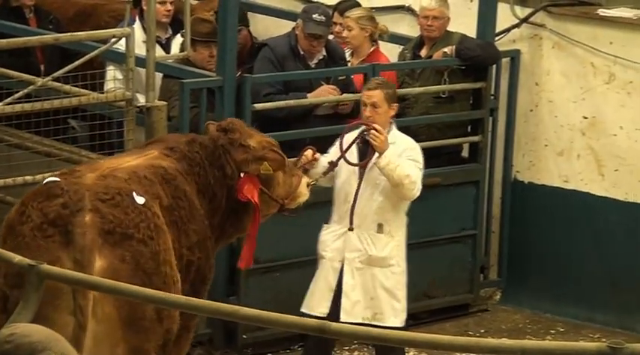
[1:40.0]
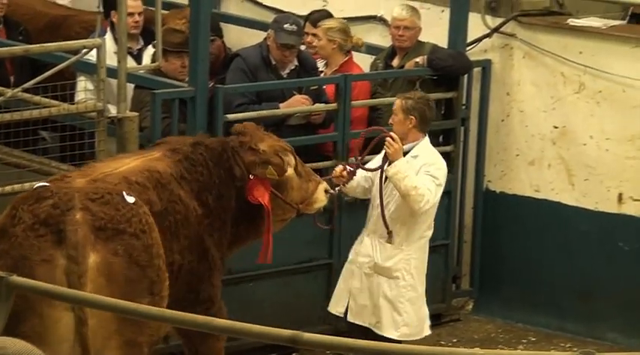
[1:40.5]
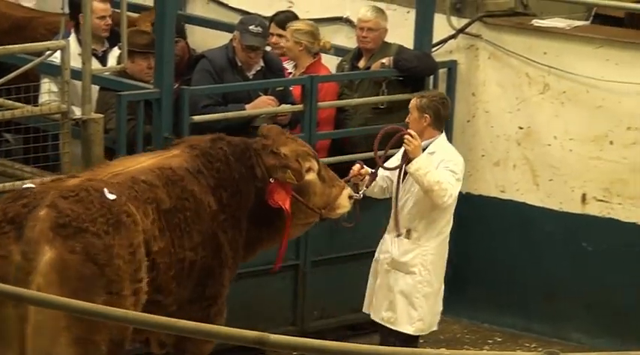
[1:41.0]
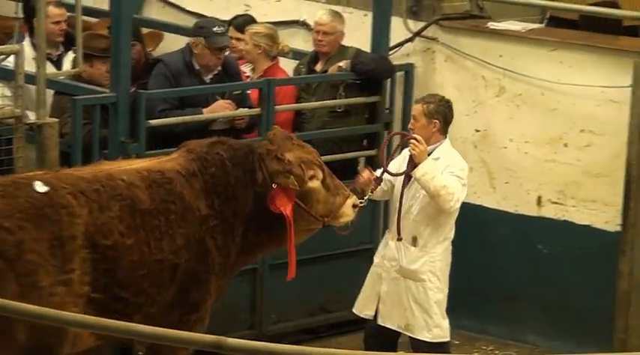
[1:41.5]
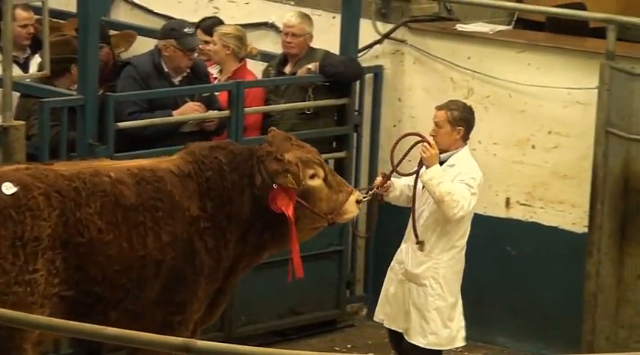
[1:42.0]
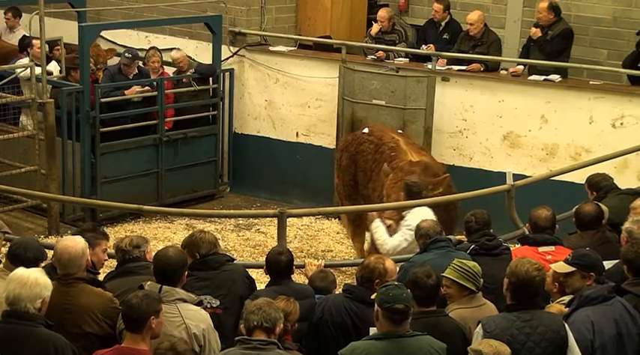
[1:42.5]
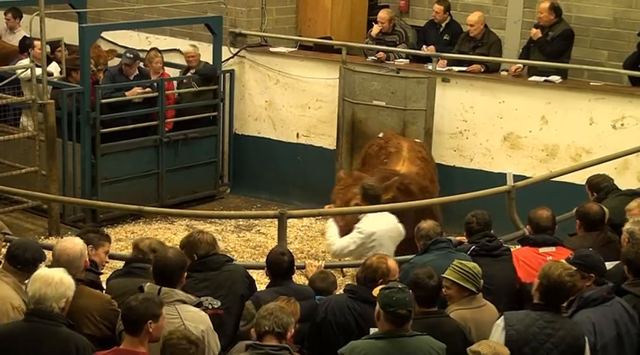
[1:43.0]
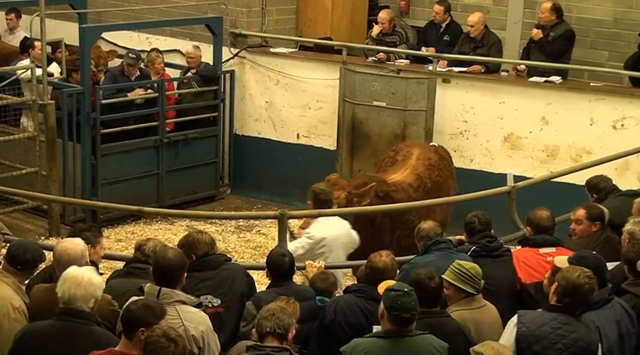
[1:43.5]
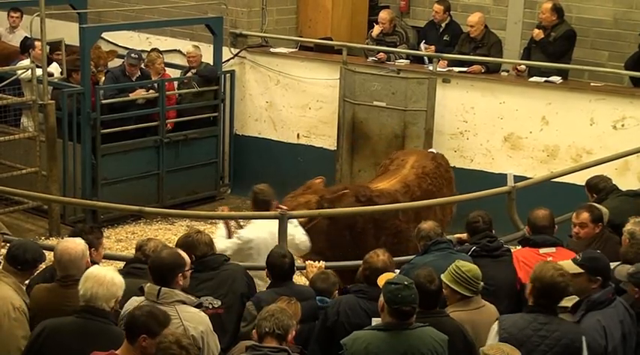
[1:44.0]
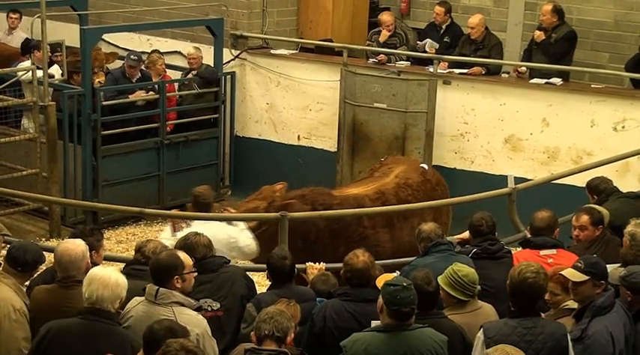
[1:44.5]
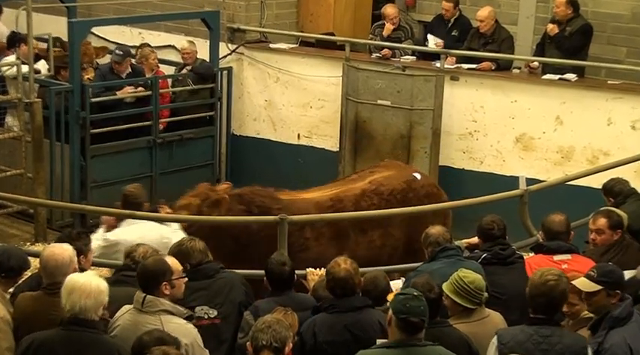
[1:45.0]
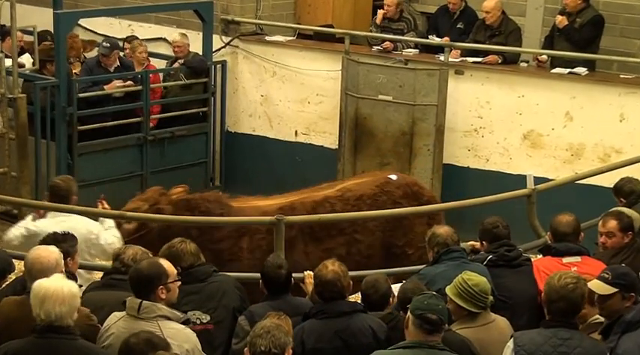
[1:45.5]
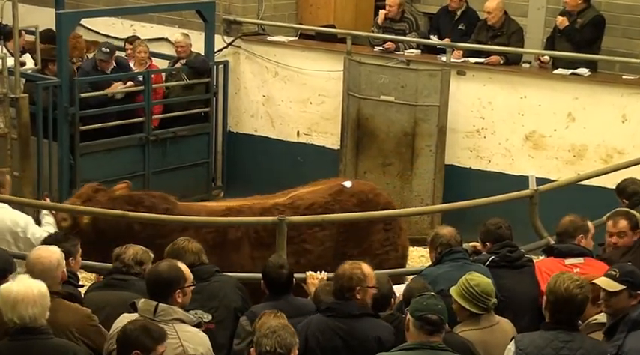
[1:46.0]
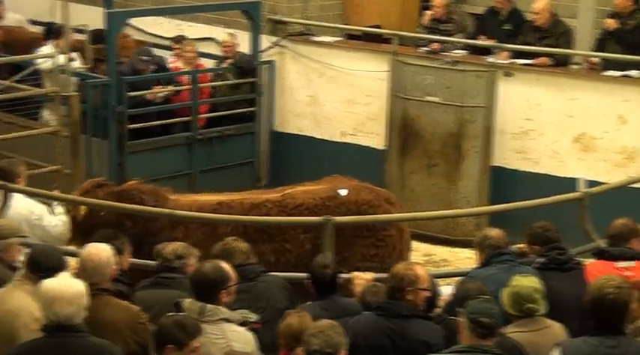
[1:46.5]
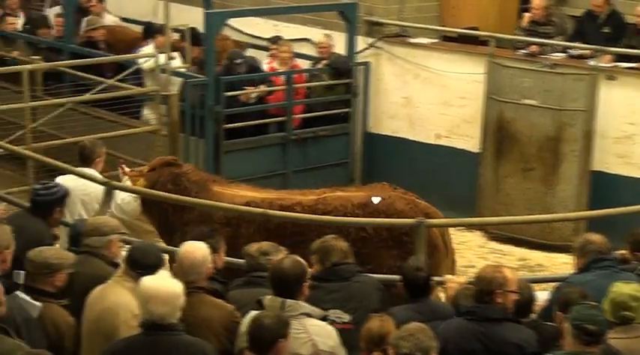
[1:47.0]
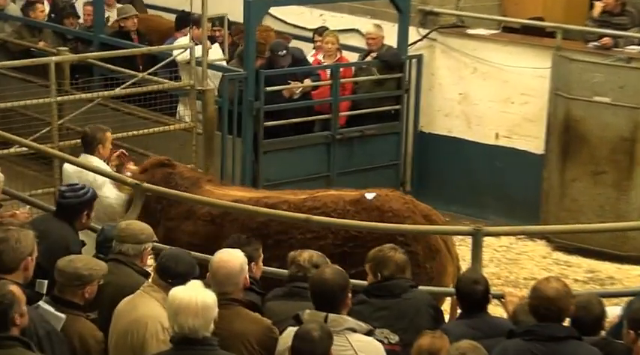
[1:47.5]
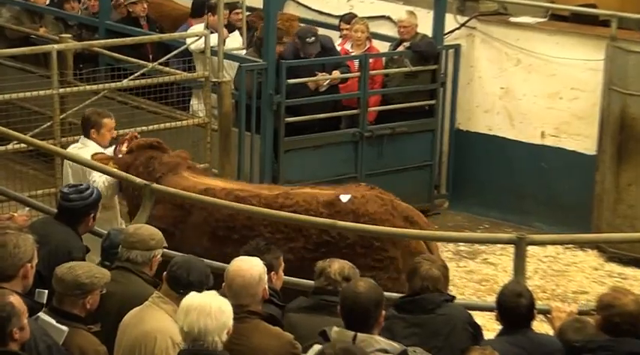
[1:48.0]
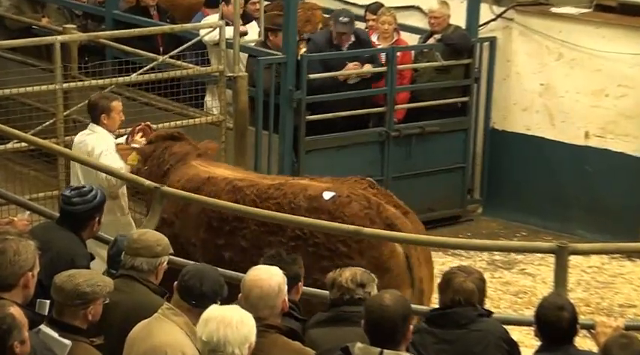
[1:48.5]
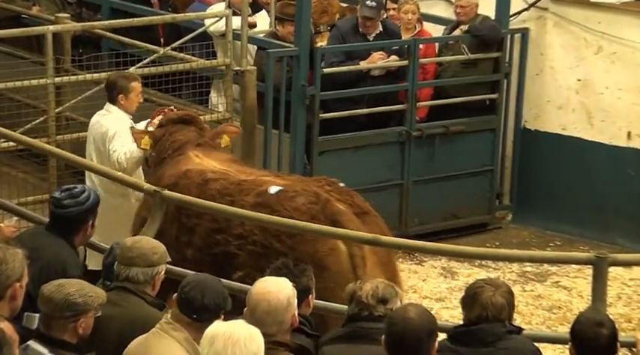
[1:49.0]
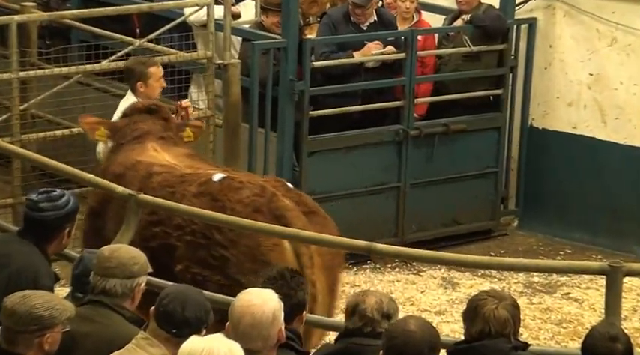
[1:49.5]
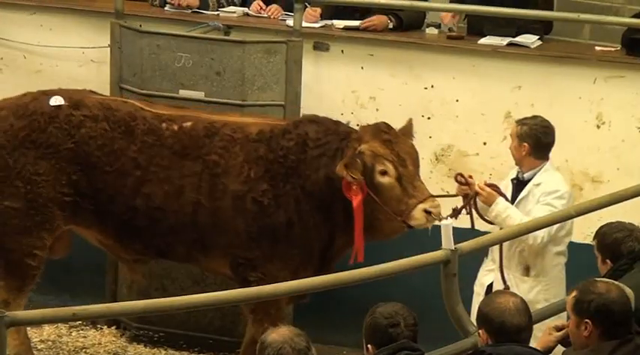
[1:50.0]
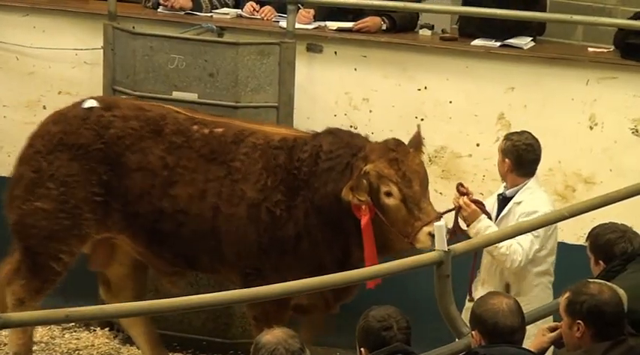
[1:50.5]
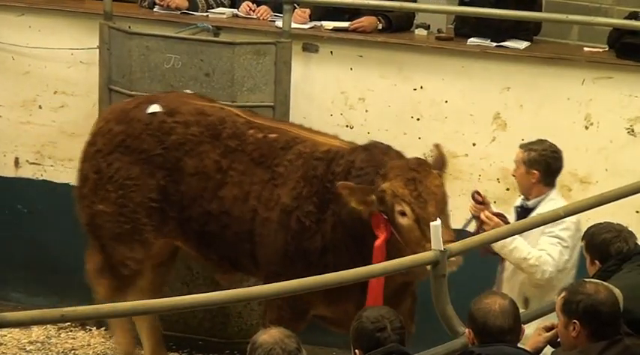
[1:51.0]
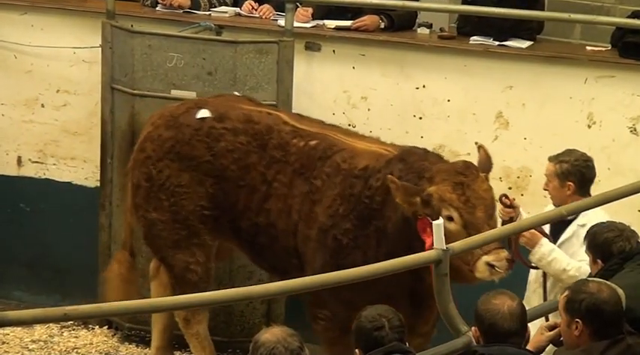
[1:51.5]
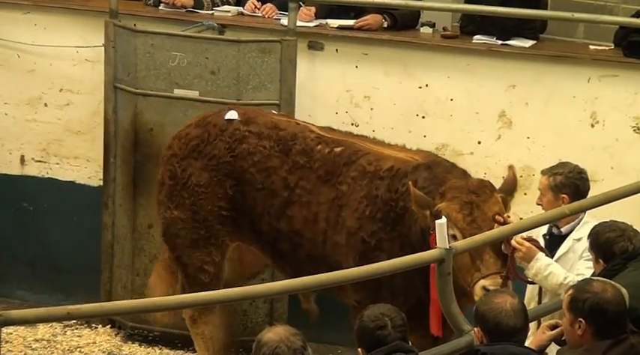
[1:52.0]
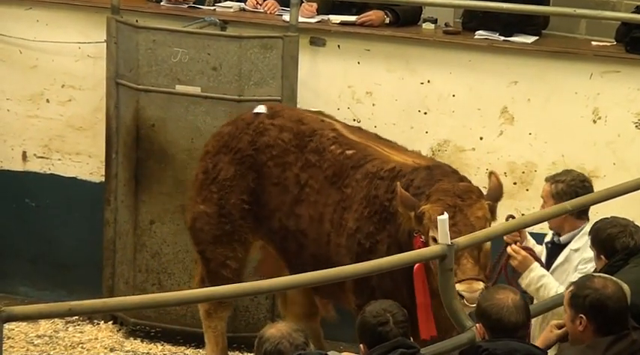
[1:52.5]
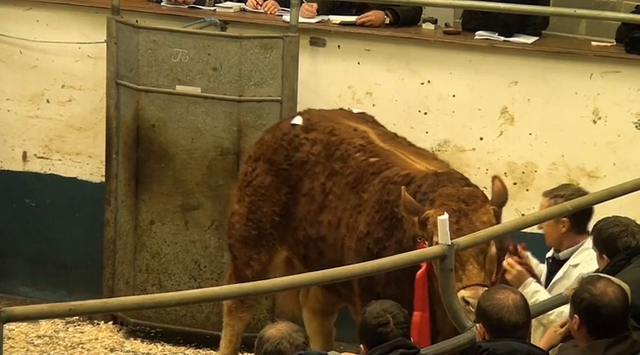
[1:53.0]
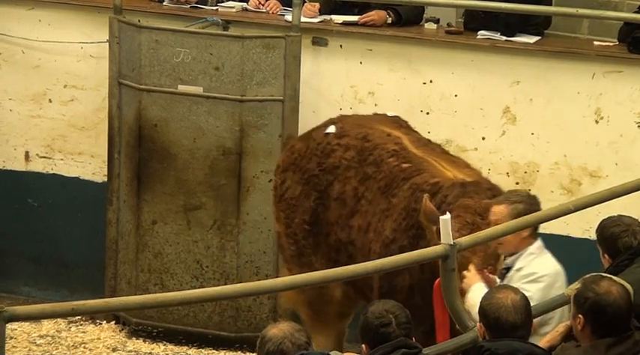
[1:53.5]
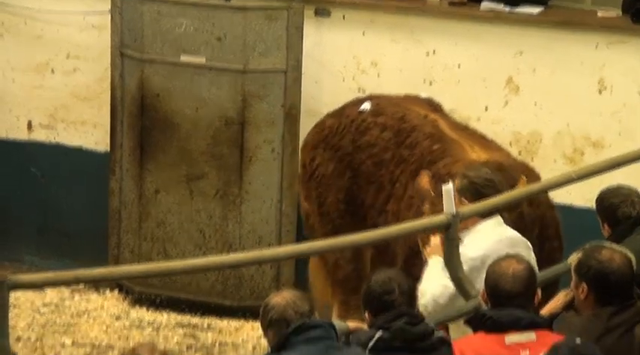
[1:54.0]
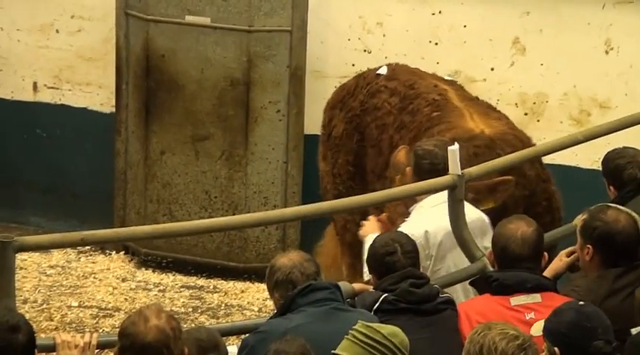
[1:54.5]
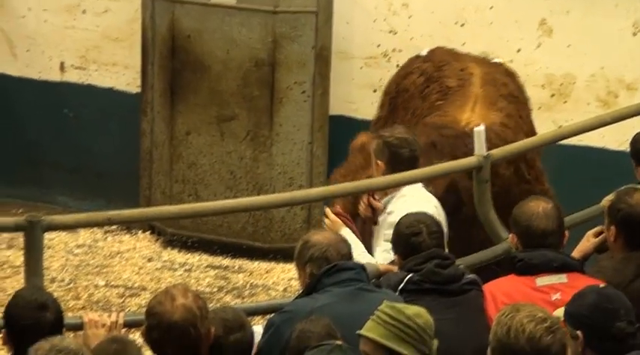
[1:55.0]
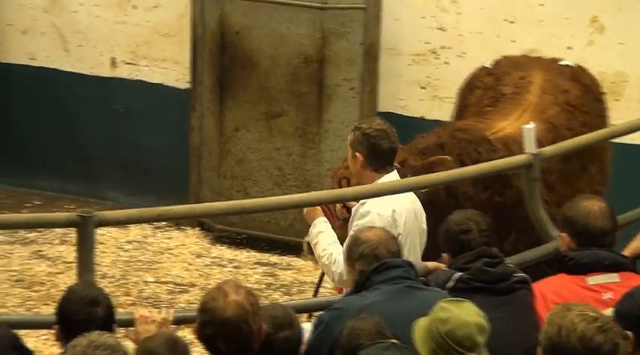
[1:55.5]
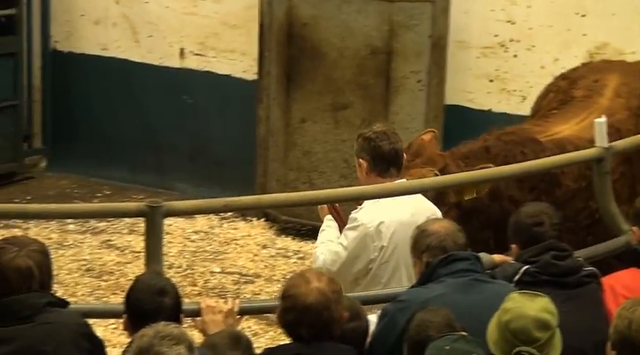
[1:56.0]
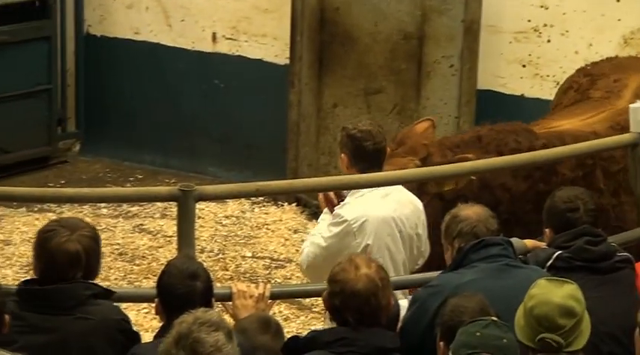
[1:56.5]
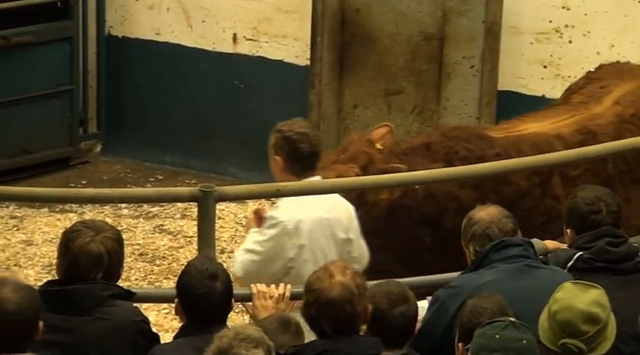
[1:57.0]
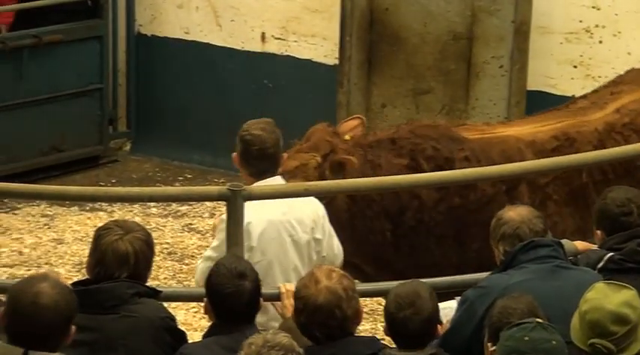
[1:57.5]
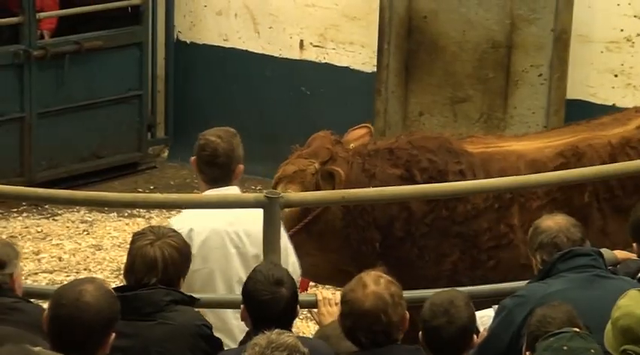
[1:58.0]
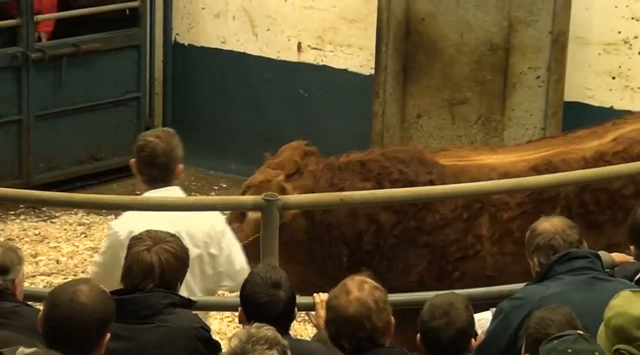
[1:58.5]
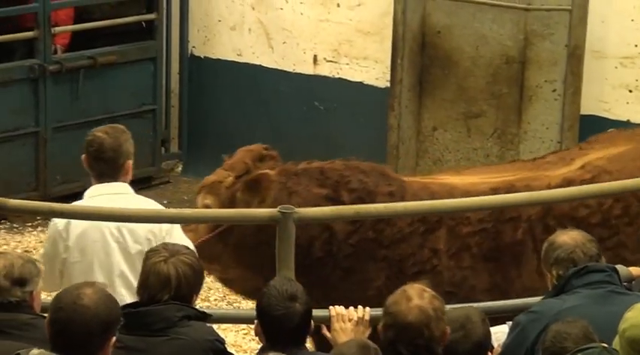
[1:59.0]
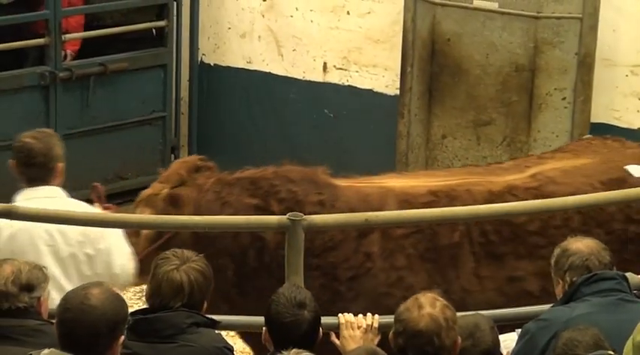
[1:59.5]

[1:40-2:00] The cow, or bull, continues to be led in circles around the little area while a huge number of spectators watch. It has a red ribbon and a shaved spot on its back. Only one man is taking it around at this point. Some people sit a level above, and many others sit behind a fence, watching the cow being paraded around.